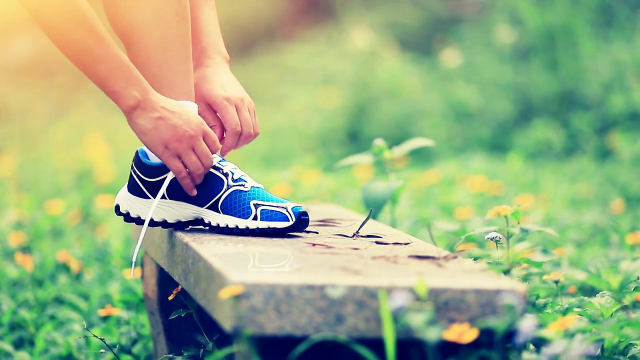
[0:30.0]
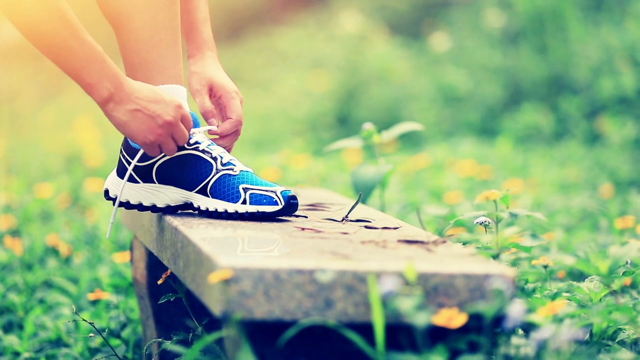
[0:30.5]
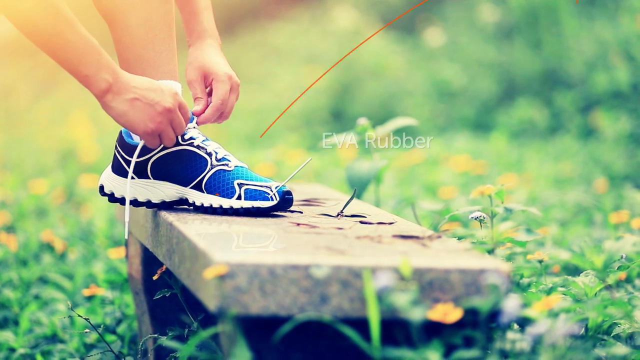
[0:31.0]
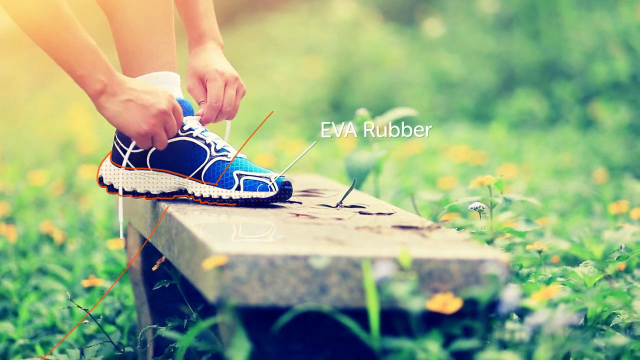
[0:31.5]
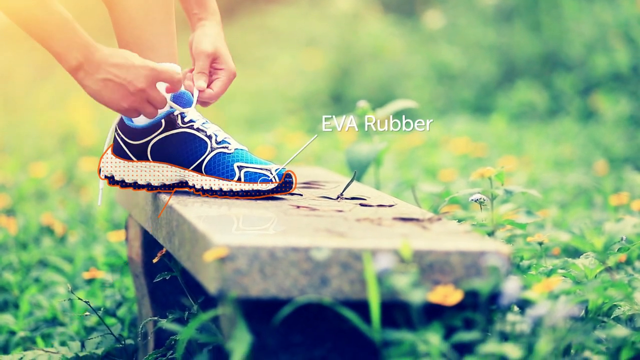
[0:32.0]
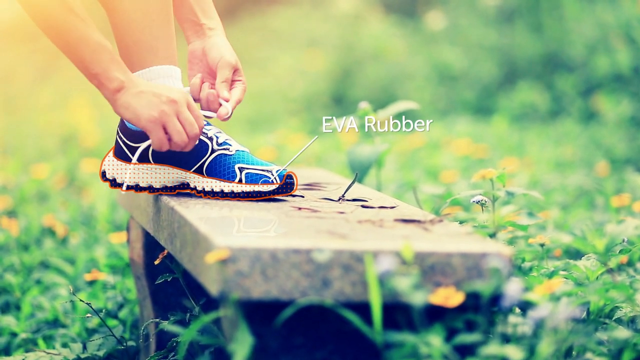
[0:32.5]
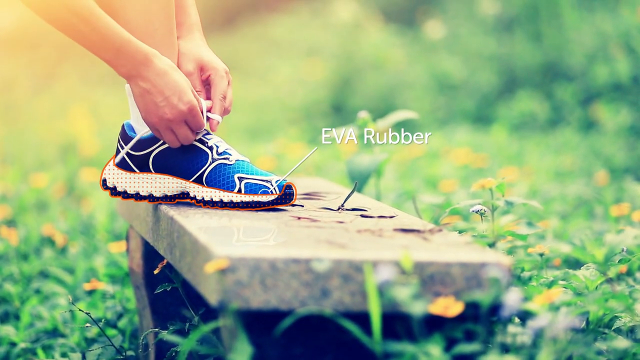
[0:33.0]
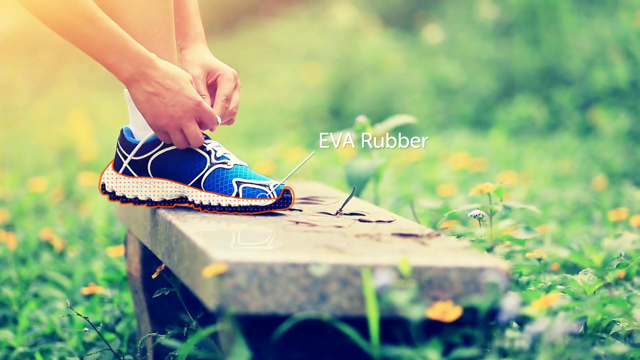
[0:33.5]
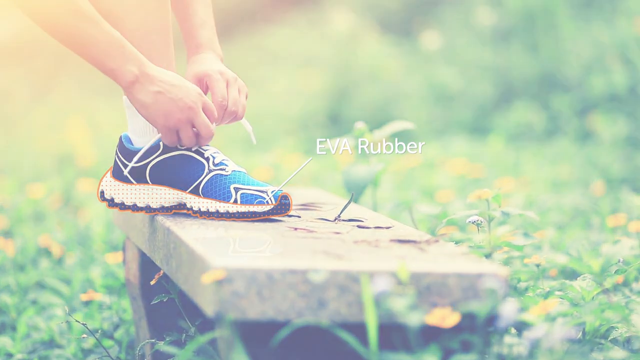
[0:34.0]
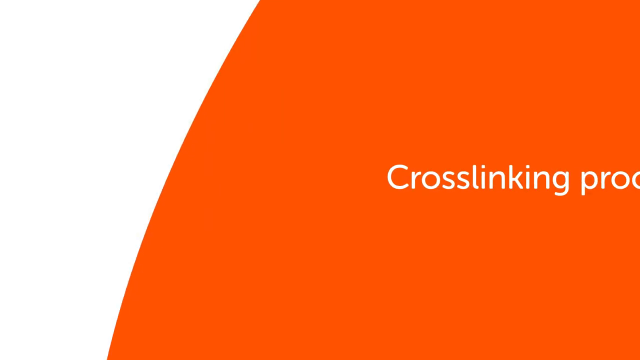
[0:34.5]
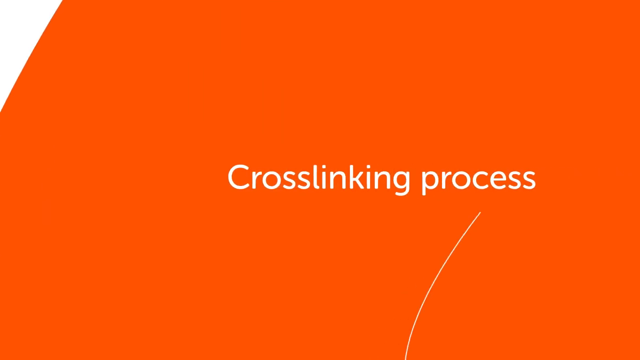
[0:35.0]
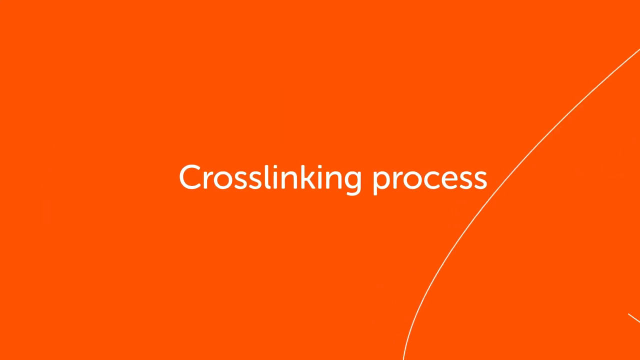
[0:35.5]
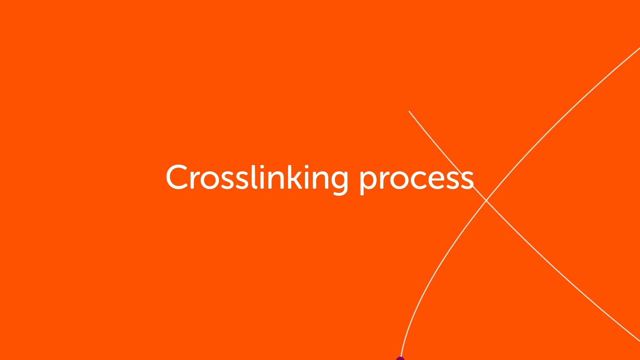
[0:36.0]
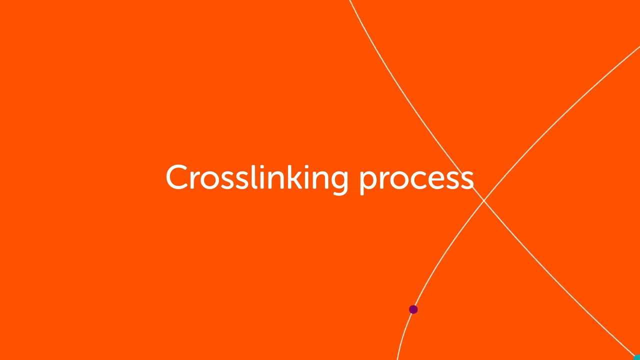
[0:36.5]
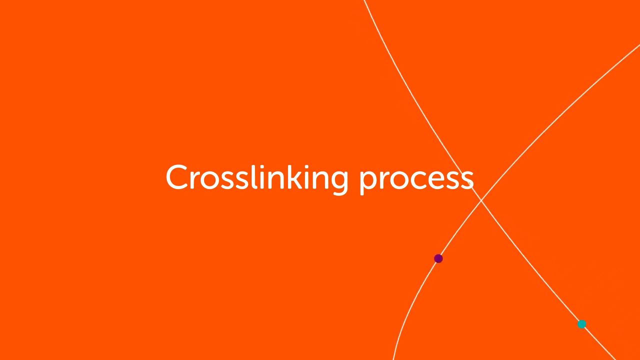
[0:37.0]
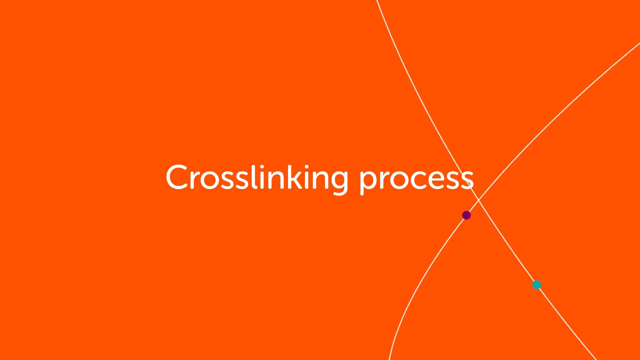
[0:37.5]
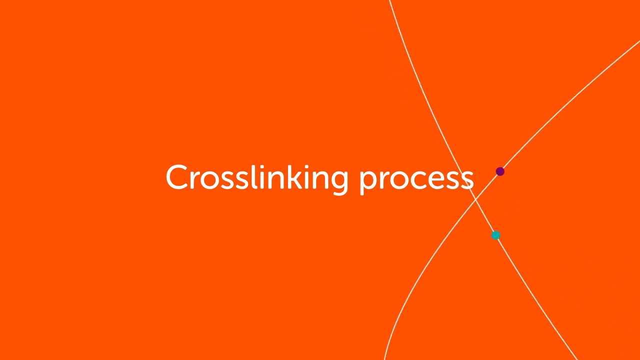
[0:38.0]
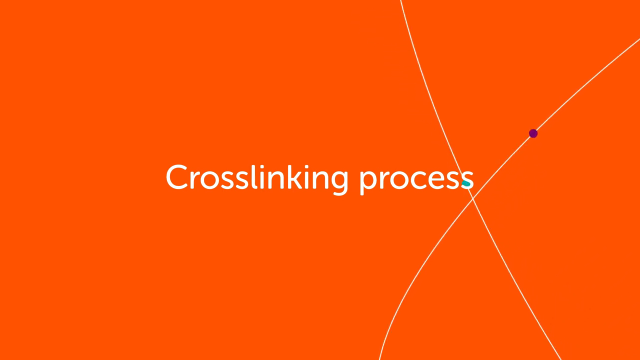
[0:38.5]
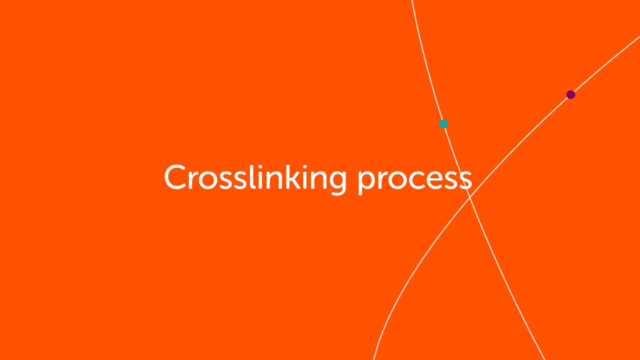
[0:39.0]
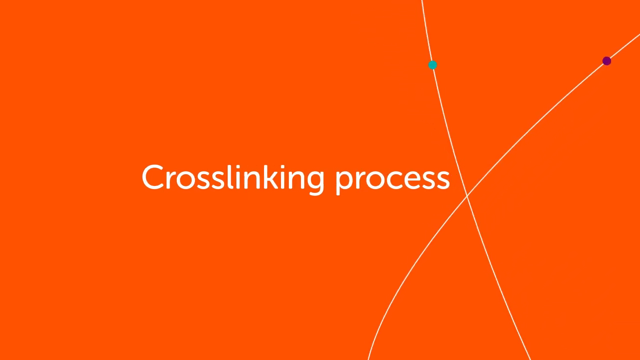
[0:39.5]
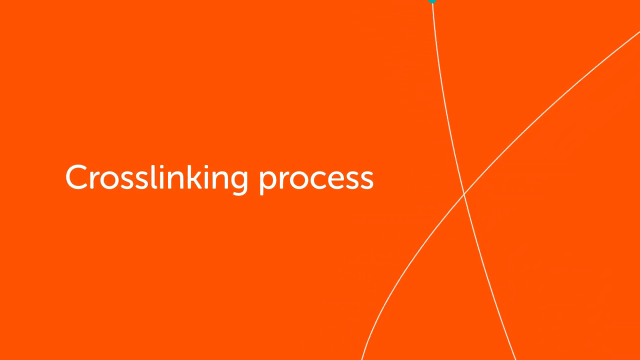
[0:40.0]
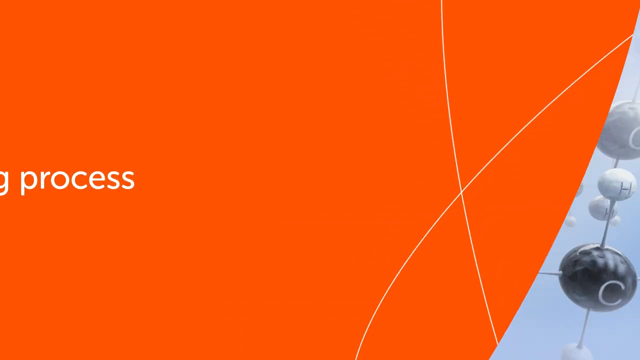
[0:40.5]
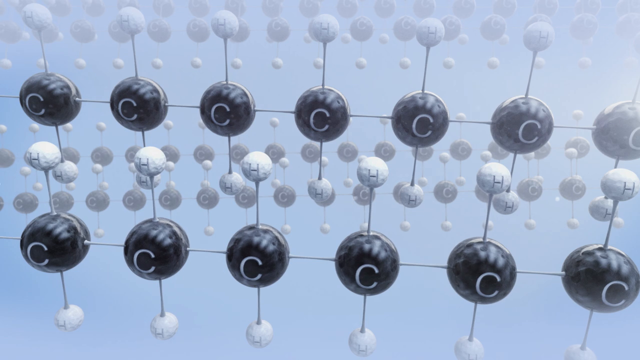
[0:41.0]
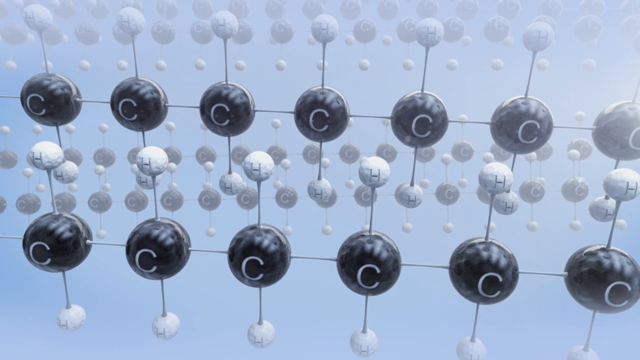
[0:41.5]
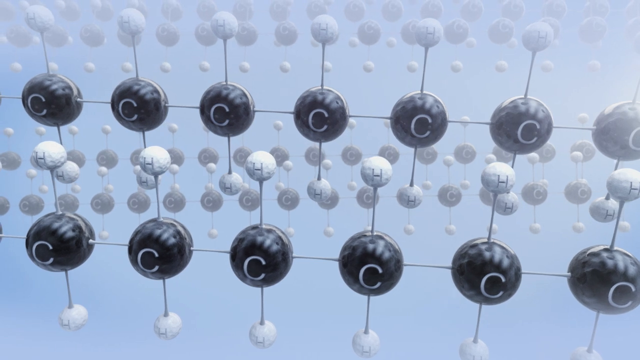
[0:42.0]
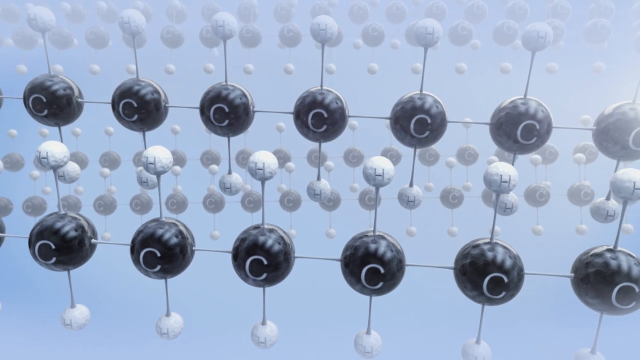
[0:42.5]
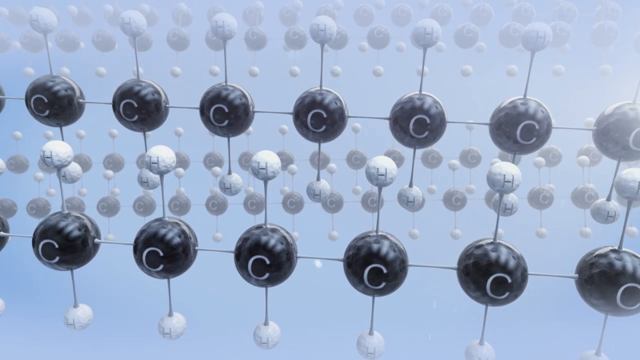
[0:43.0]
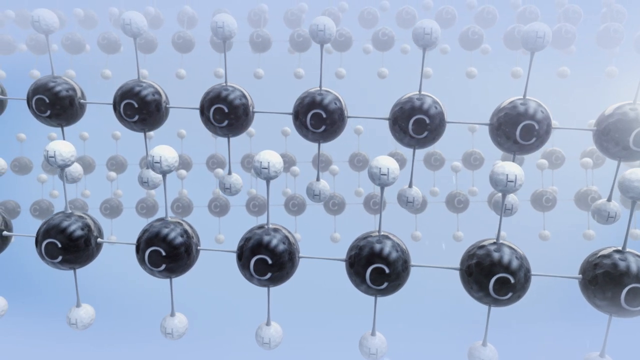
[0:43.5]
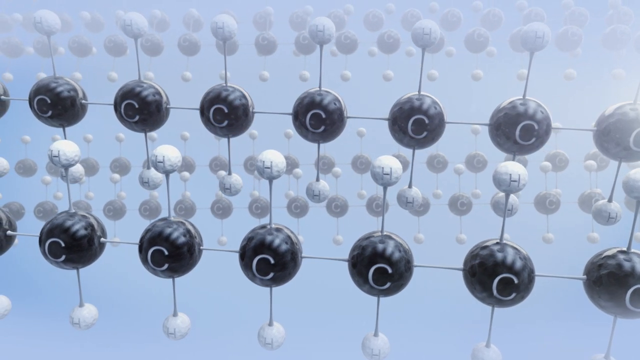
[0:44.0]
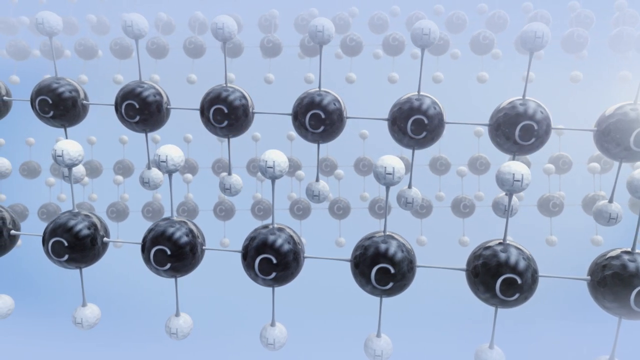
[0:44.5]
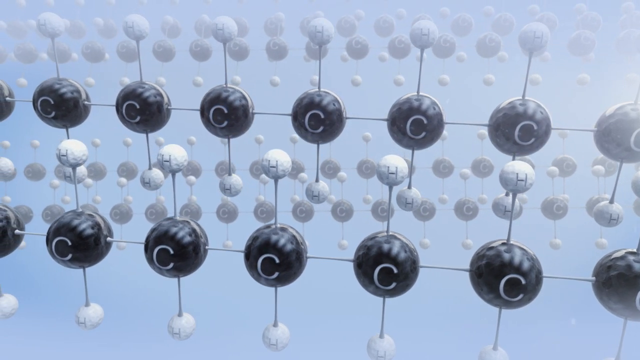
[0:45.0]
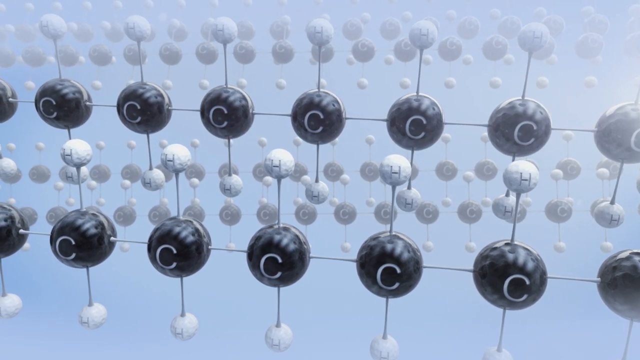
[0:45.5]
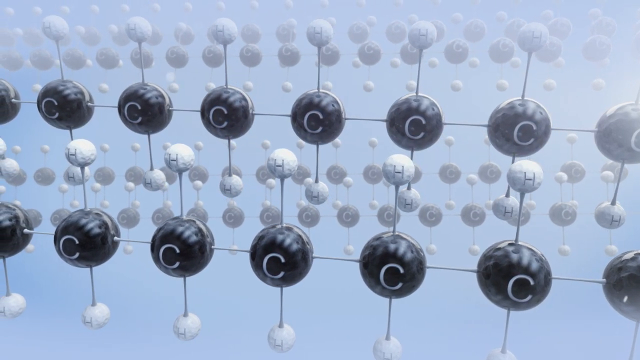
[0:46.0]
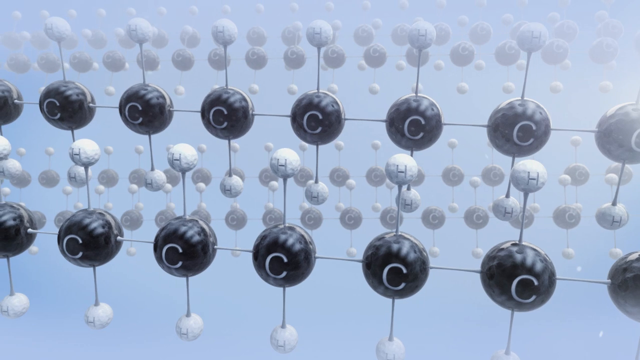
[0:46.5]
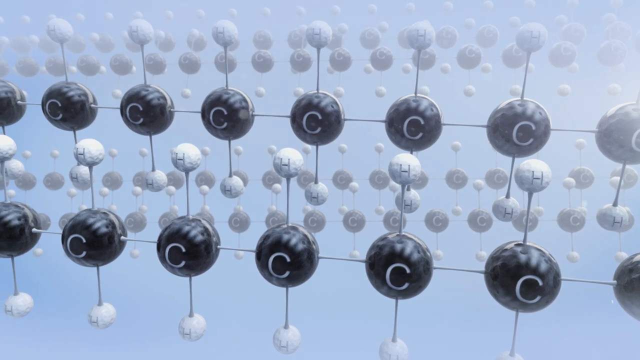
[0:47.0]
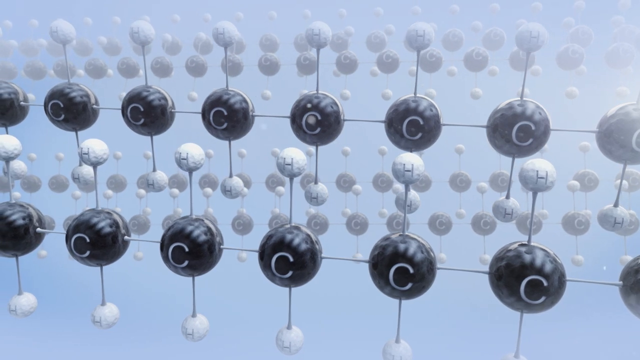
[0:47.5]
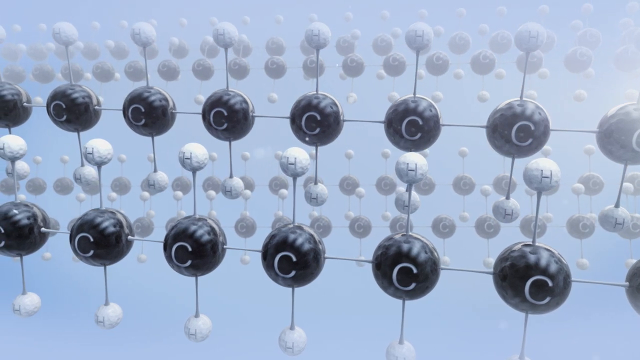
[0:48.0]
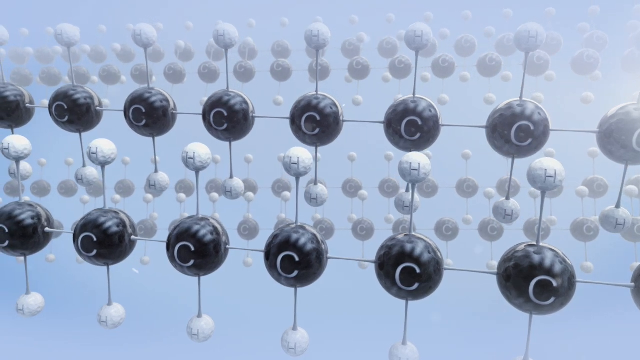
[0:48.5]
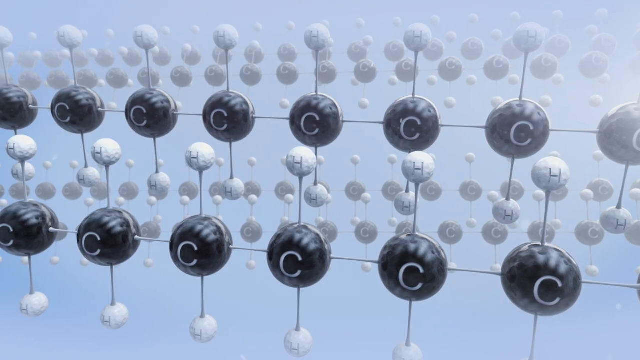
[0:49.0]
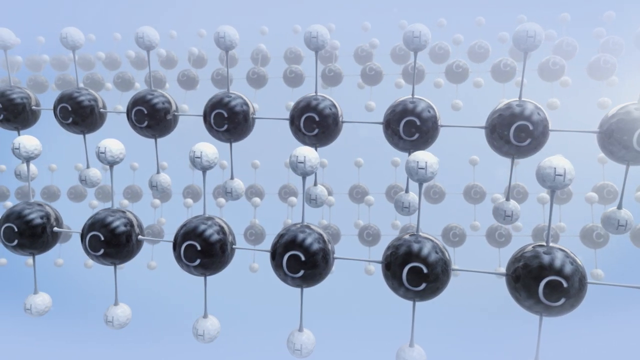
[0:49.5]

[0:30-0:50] A small concrete bench is surrounded by a bunch of green plants and flowers. Someone has their left foot up on the bench; only their knee and hands are visible as they tie their shoe. The shoe is light blue and dark blue with a white sole. An arrow comes up off the shoe, and at its tip "Eva rubber" is written in white. The screen then turns orange, and across the middle in white it says "cross-linking process." It cuts to a light blue screen with a bunch of little black balls, each marked with the letter C. Coming up off each of those balls are two smaller balls marked with the letter H, and they are all connected, running across the screen.